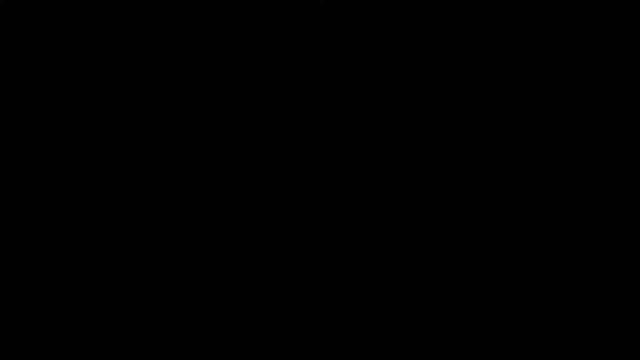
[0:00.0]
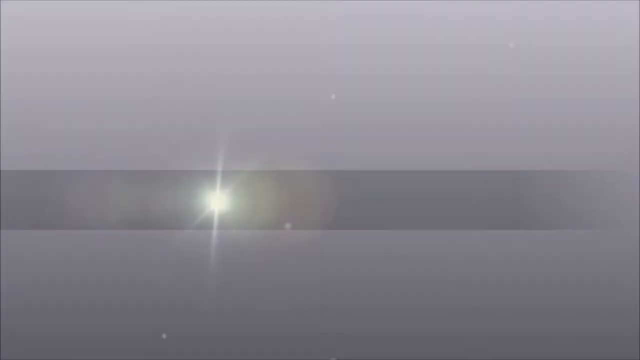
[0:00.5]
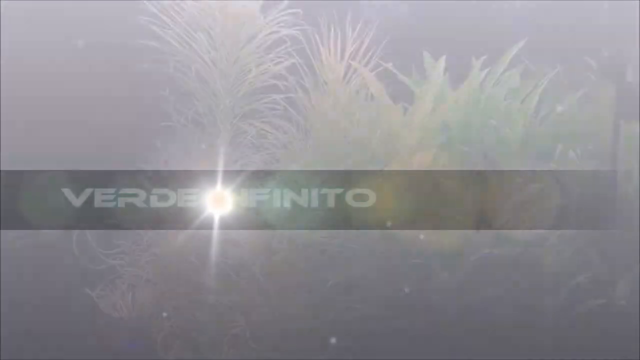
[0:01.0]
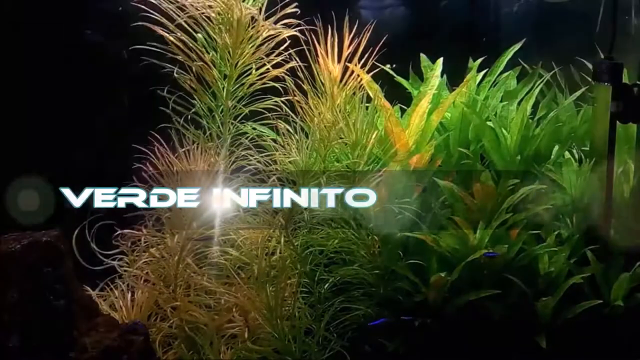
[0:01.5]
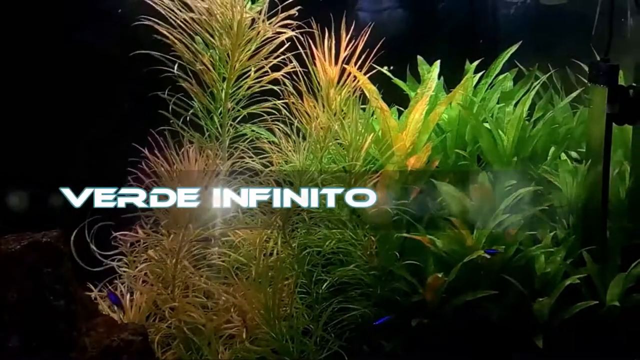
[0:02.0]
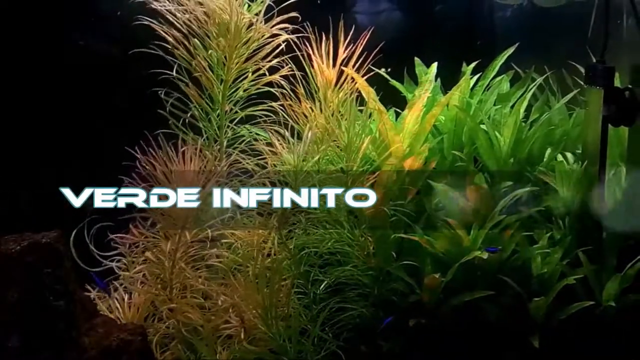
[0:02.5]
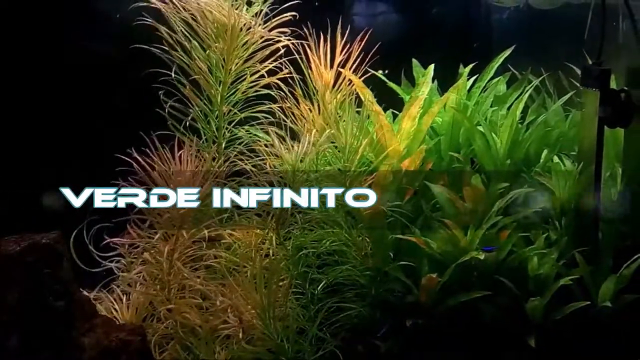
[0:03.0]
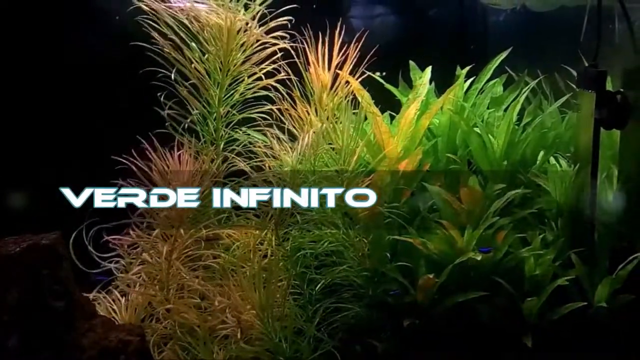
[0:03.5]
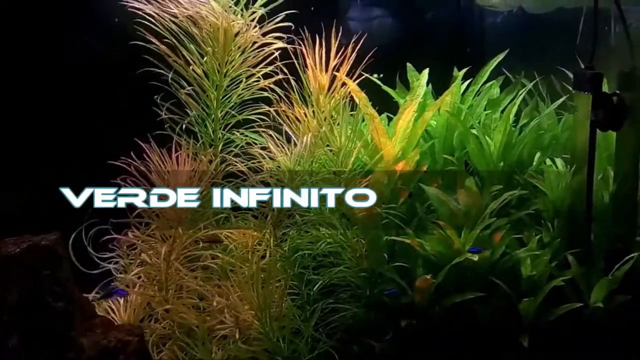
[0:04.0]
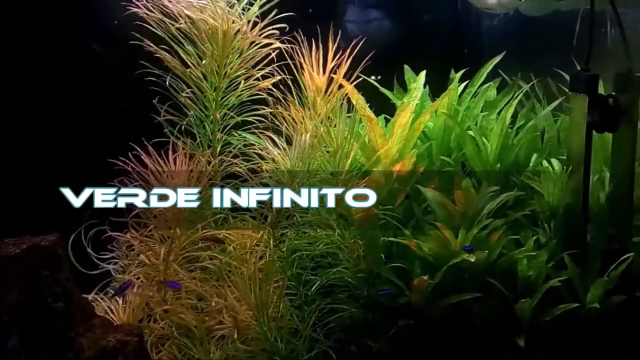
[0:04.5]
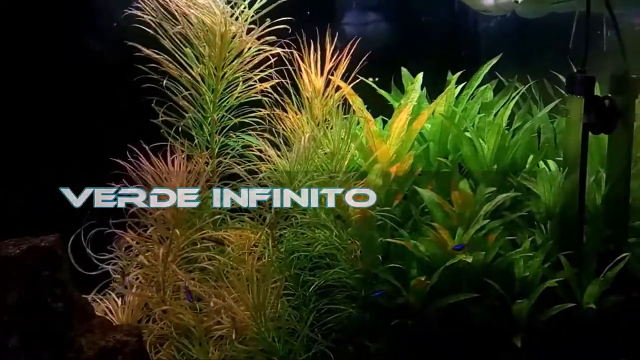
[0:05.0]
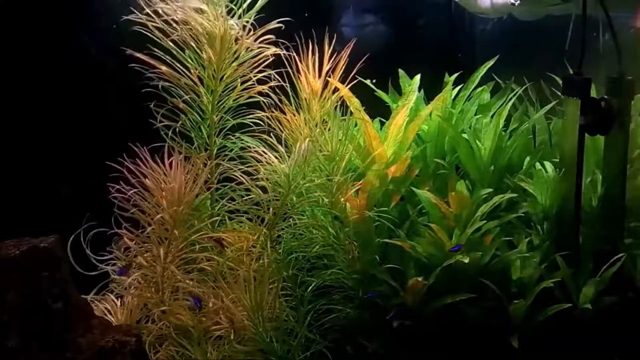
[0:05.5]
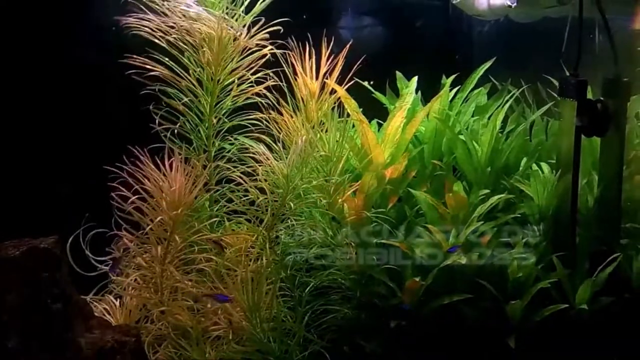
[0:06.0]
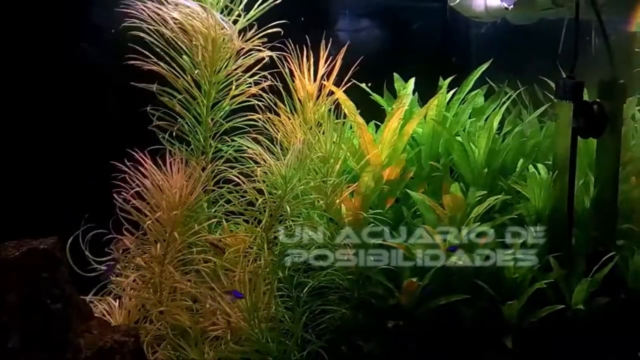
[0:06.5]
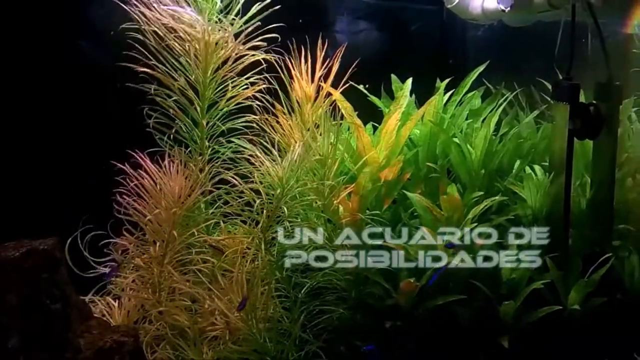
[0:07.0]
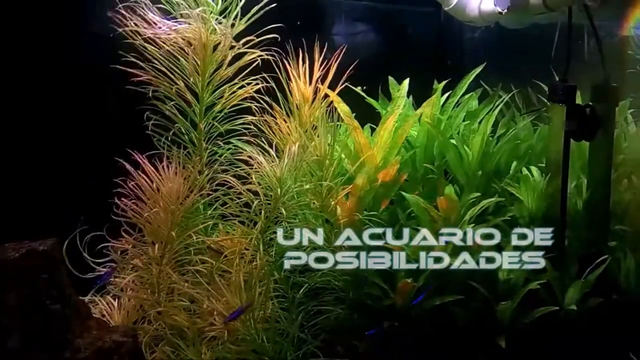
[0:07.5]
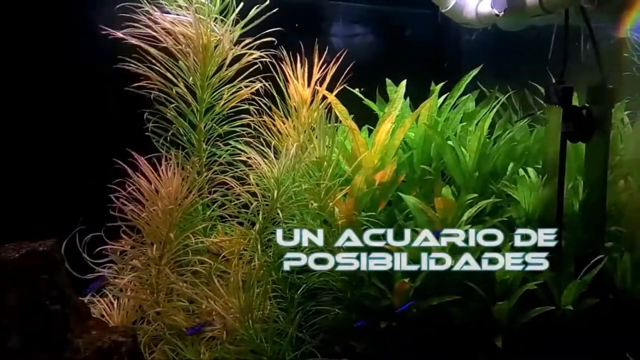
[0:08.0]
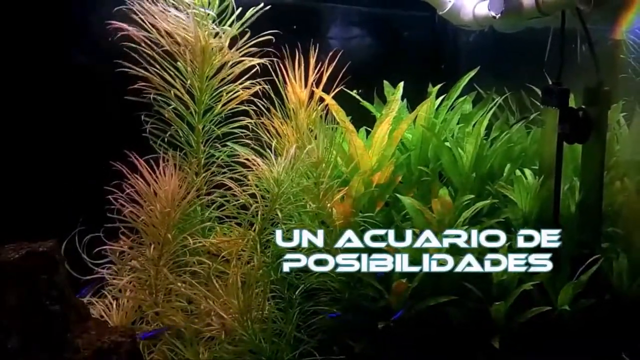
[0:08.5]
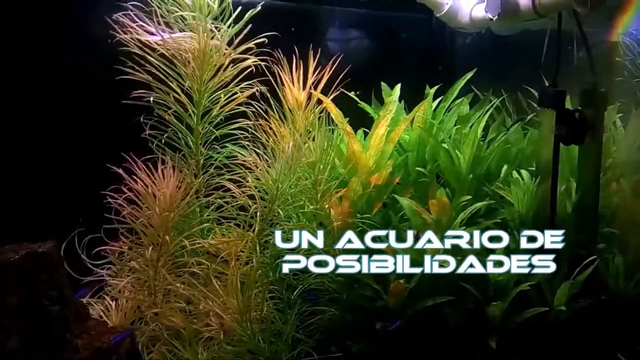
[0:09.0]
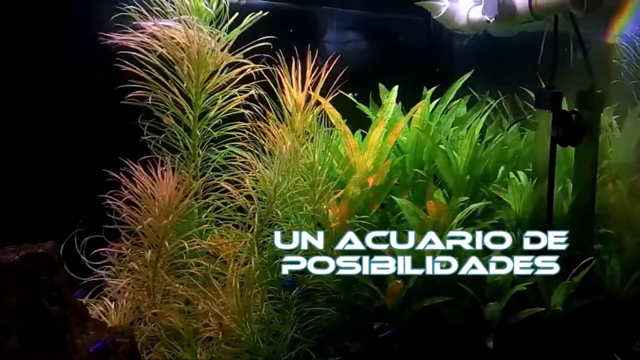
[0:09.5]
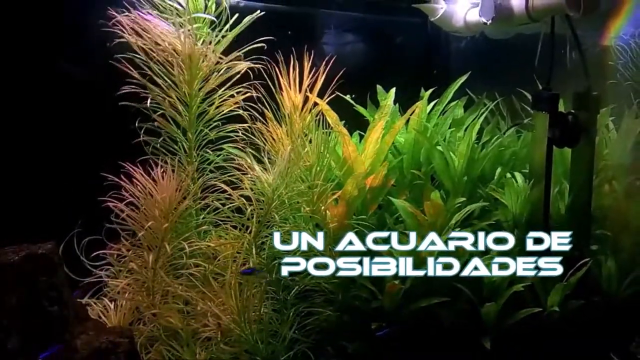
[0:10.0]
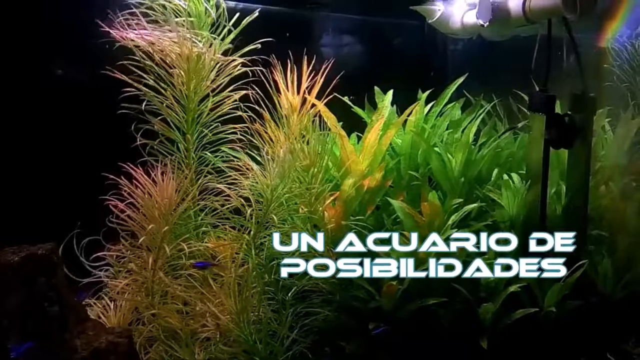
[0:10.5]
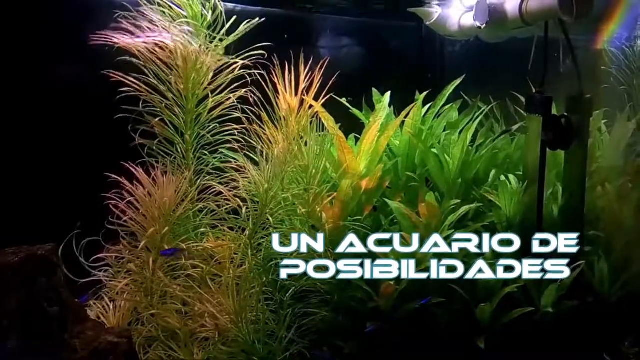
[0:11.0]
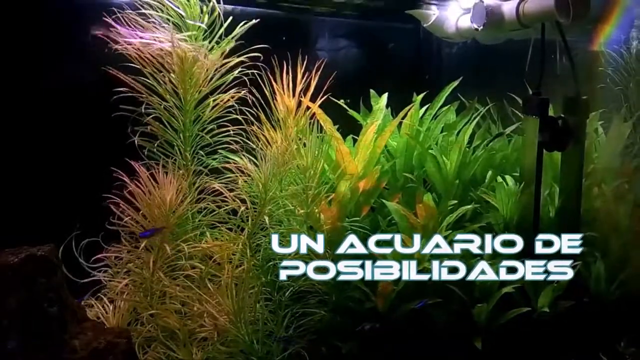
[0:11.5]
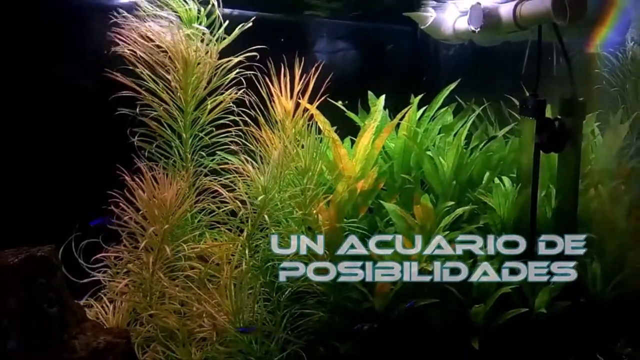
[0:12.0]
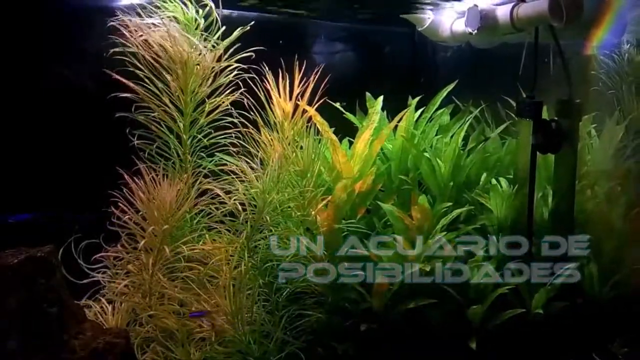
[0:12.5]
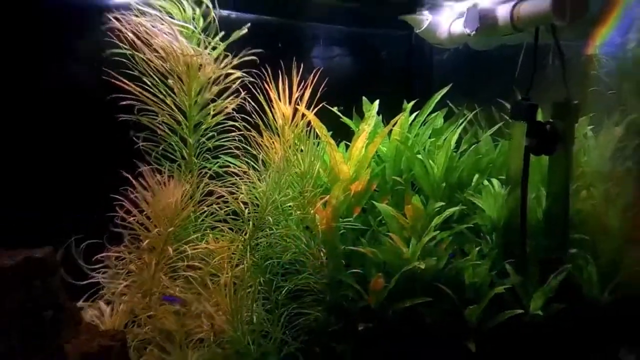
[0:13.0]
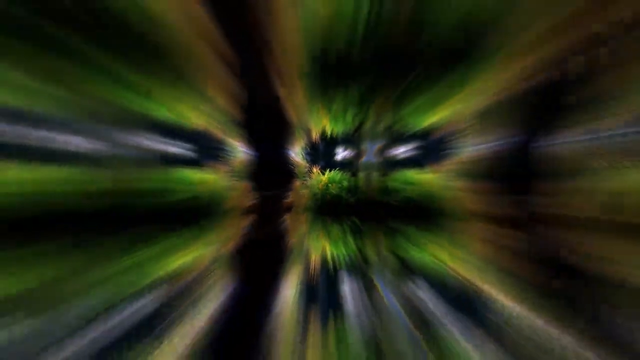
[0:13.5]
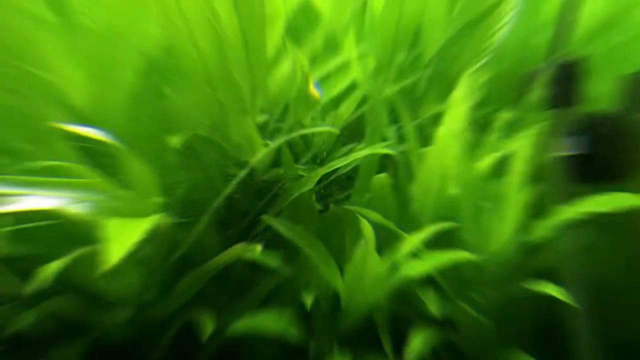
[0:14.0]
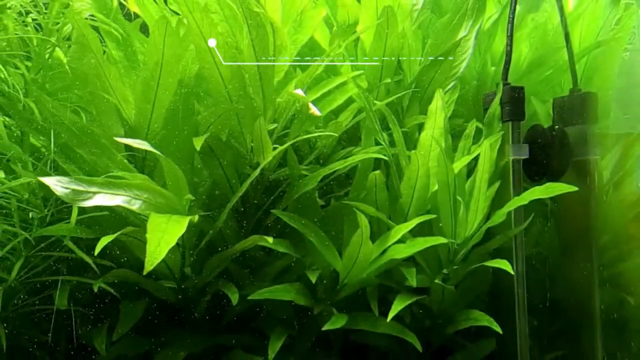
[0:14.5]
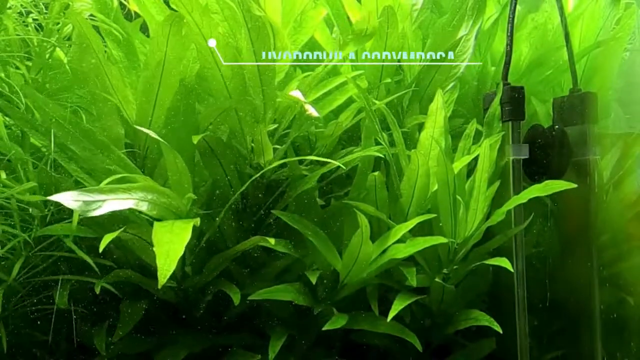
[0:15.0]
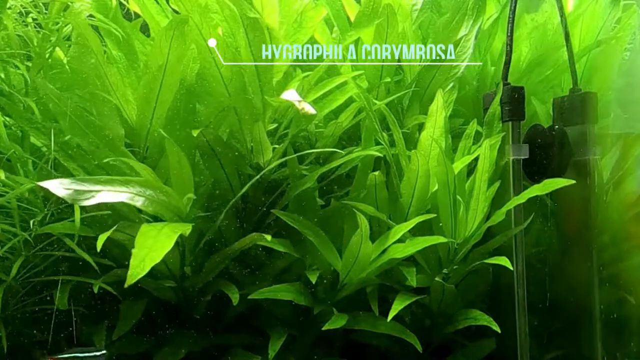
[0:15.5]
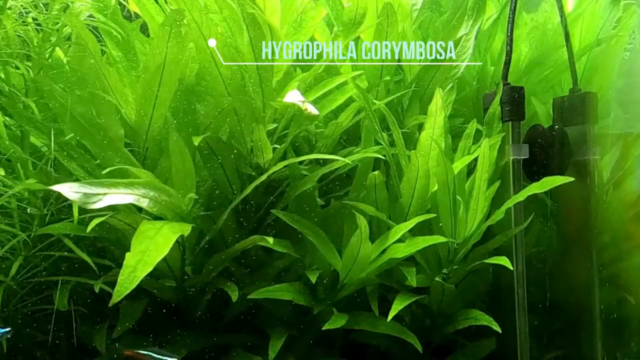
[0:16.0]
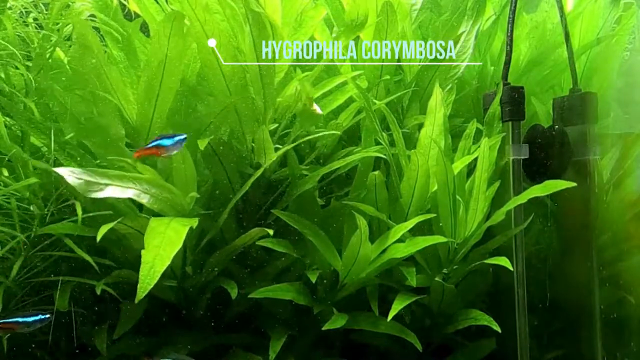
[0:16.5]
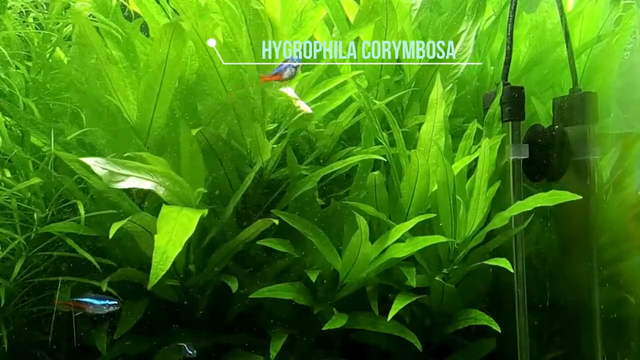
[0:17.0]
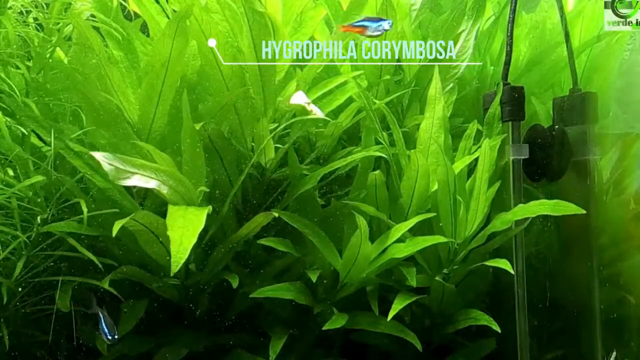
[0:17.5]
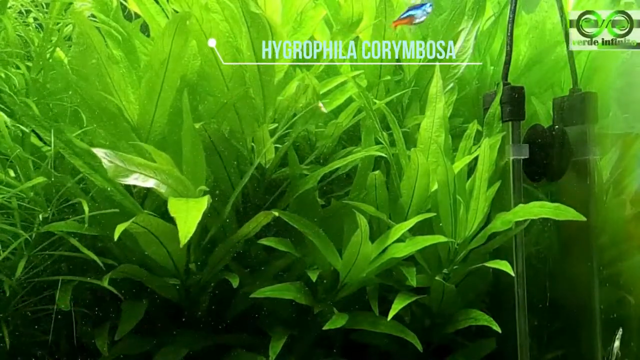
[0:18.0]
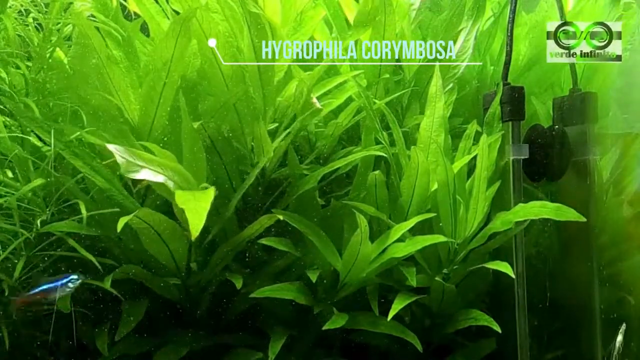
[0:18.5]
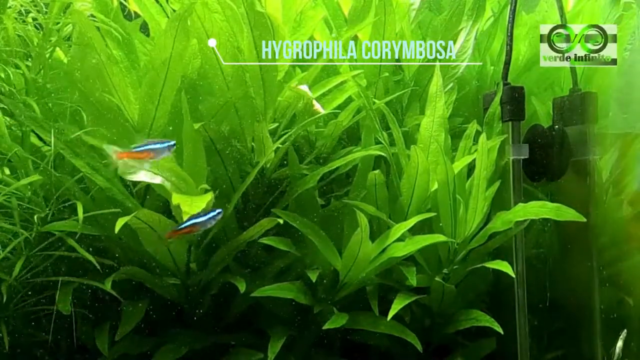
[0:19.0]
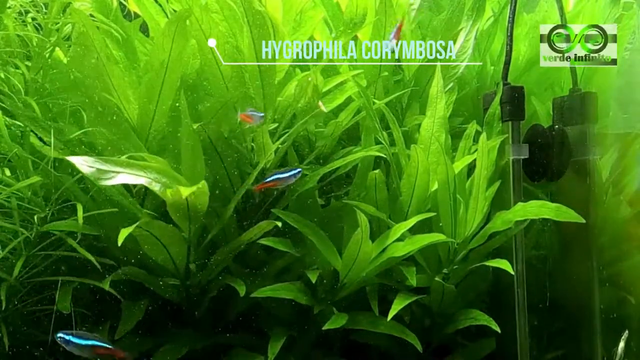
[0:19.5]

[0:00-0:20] The video opens on what appears to be a fish tank full of lush green plant life, with a tiny purple fish swimming toward the bottom of the tank. Text appears on the screen, including "Verde Infinito," which seems to be the name of the brand. The text is in a white, all-caps font and seems to be in Spanish, possibly Italian, but in any case a Romance language; it appears and disappears on the screen. It apparently says something like "absolutely green" and "aquarium of possibilities." The purple fish continues to swim toward the left of the screen, and the plant life kind of wavers in the background with the movement of the water. Some of the mechanical parts of the tank are visible on the right-hand side of the screen, with a little rainbow spectrum at the very top right.